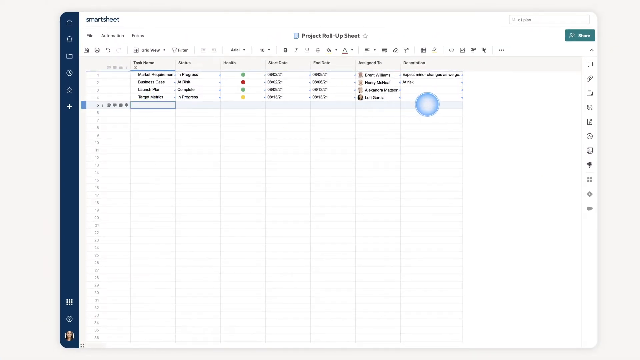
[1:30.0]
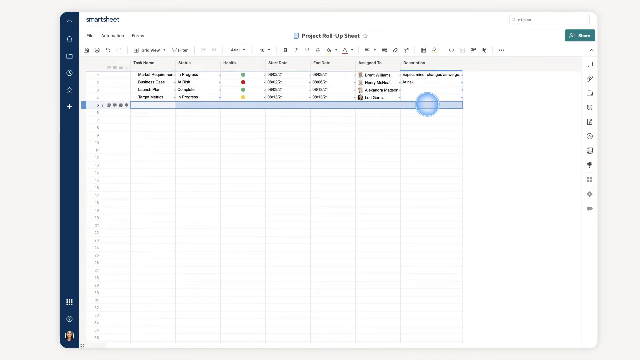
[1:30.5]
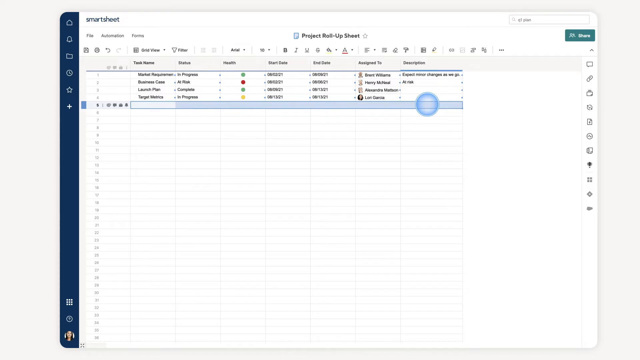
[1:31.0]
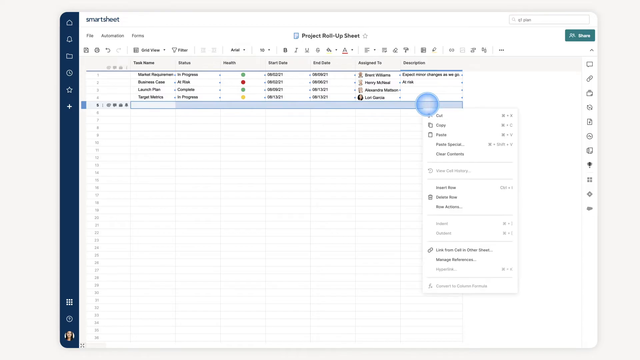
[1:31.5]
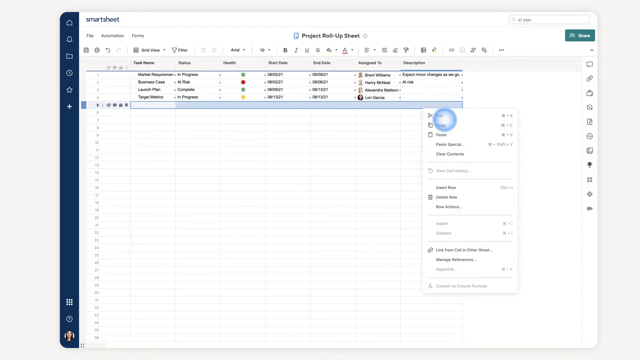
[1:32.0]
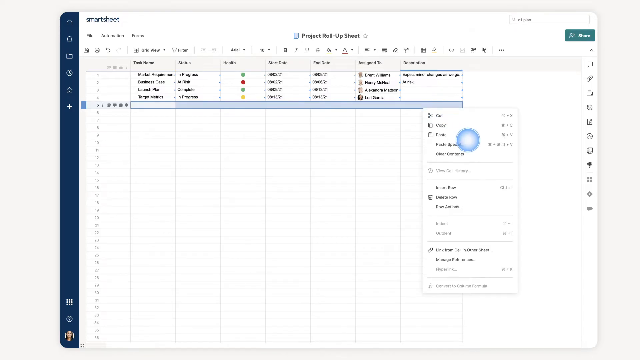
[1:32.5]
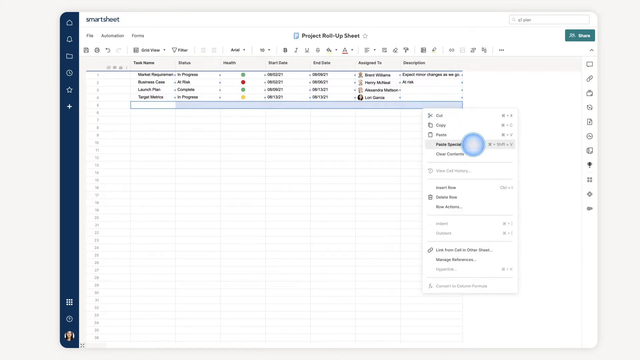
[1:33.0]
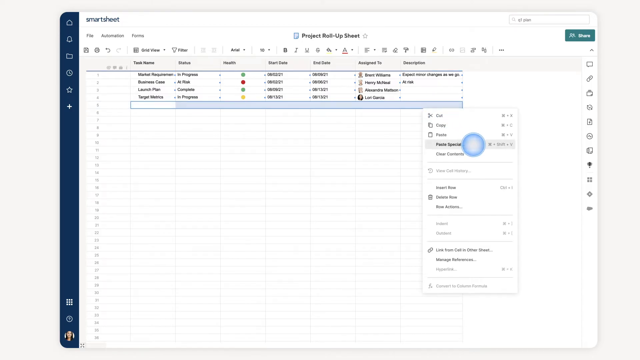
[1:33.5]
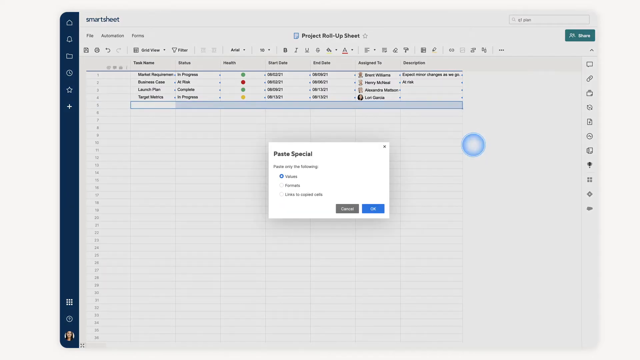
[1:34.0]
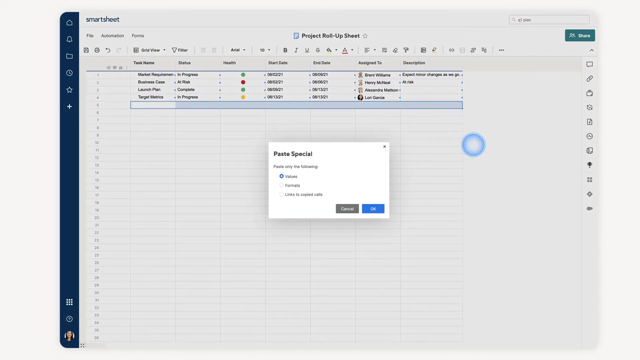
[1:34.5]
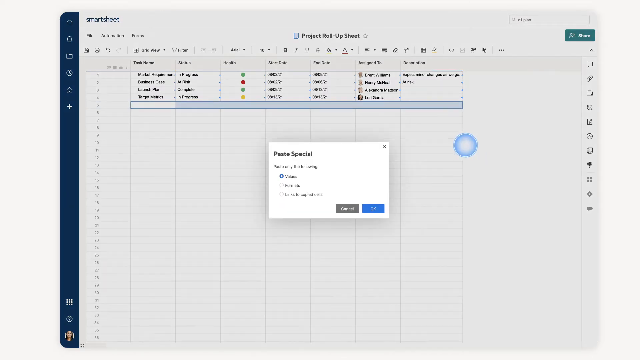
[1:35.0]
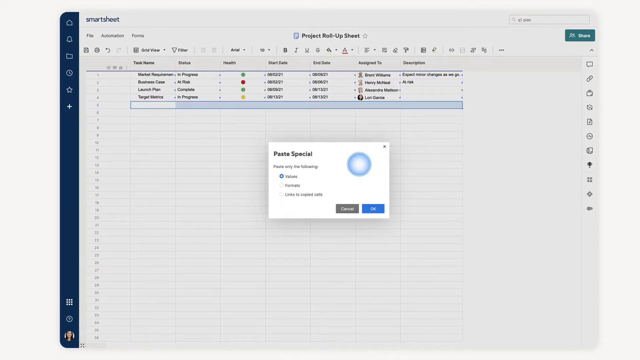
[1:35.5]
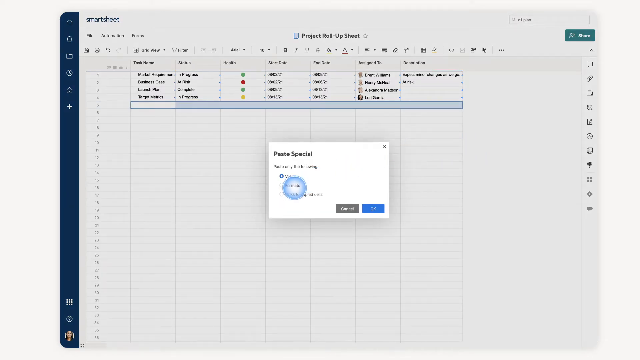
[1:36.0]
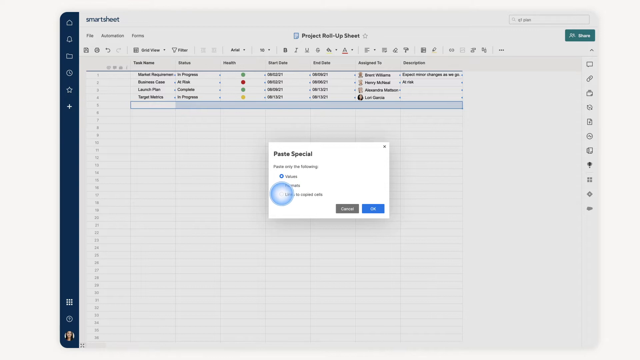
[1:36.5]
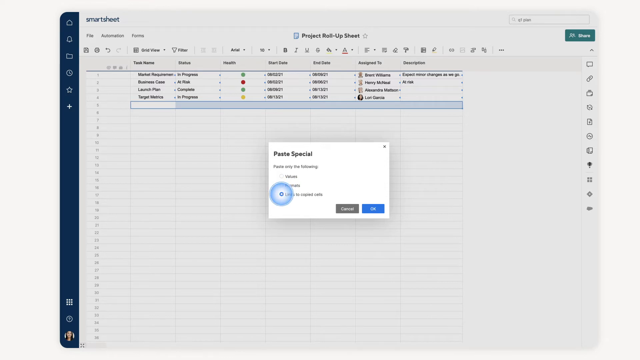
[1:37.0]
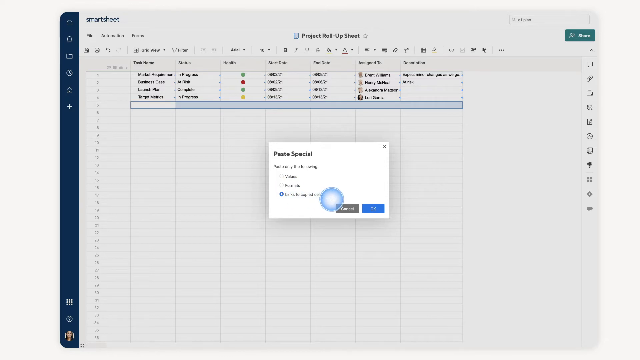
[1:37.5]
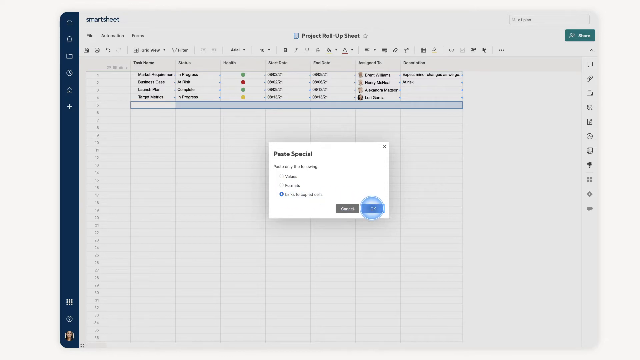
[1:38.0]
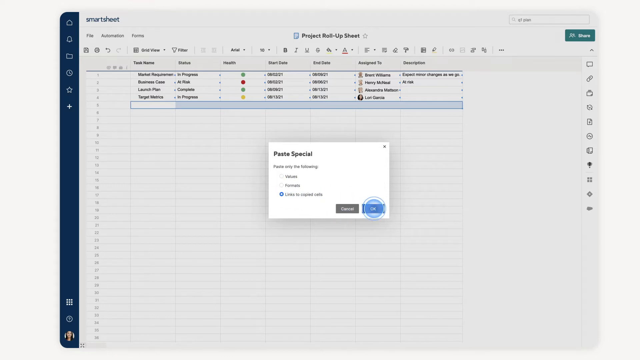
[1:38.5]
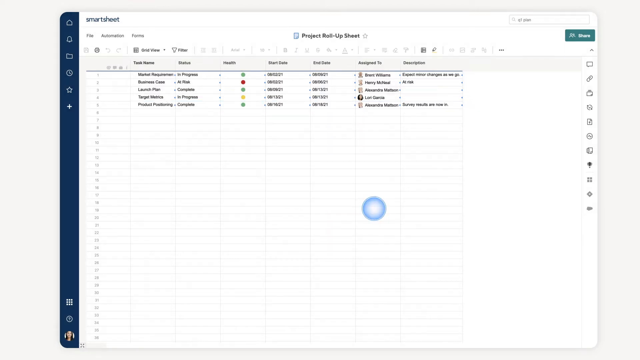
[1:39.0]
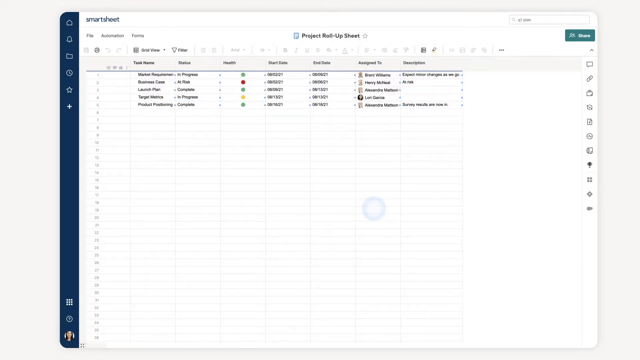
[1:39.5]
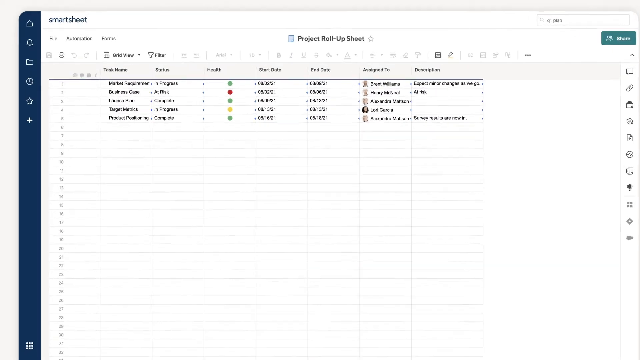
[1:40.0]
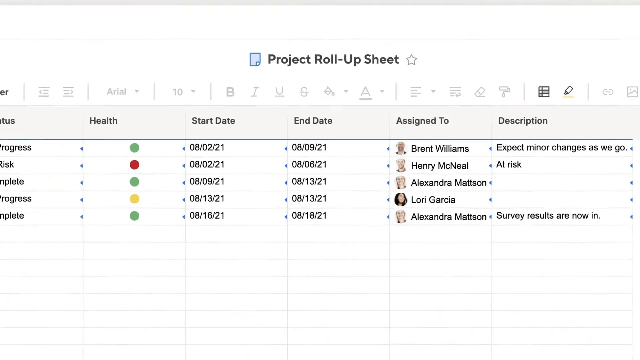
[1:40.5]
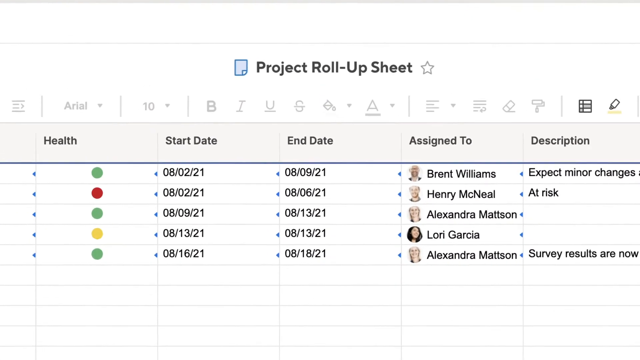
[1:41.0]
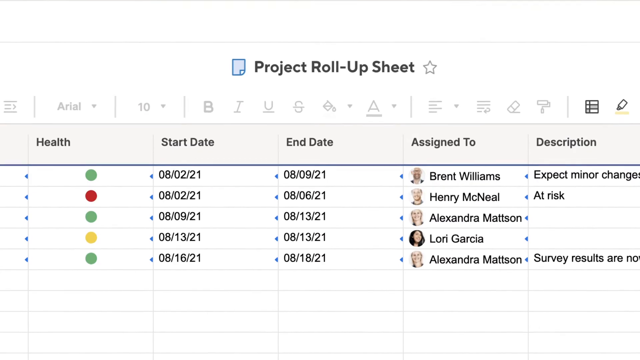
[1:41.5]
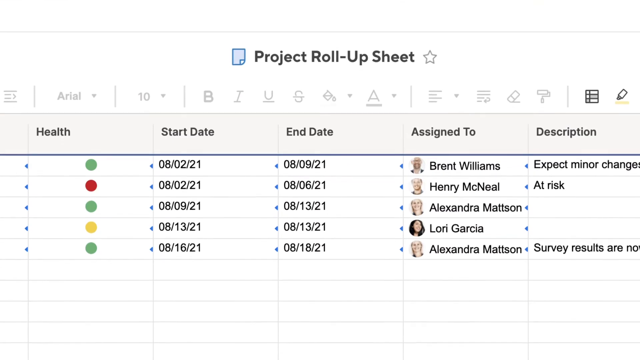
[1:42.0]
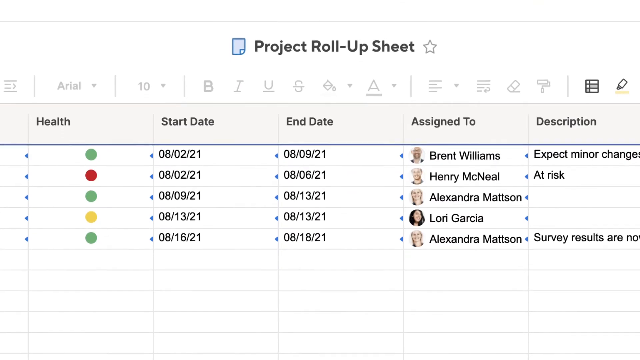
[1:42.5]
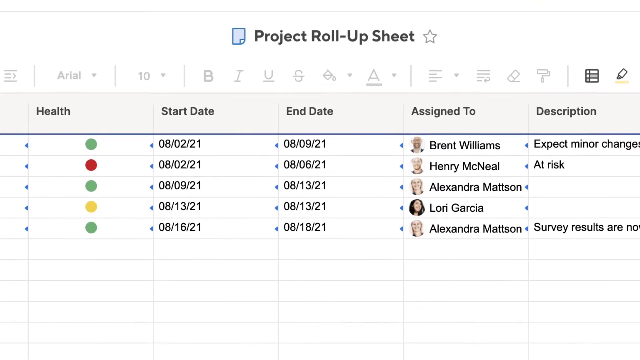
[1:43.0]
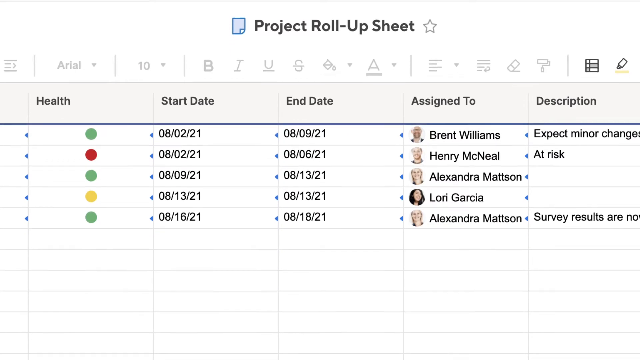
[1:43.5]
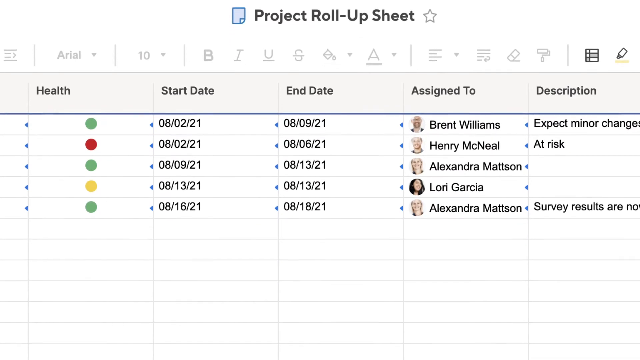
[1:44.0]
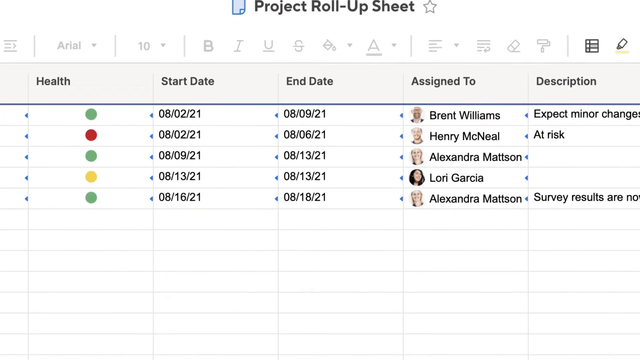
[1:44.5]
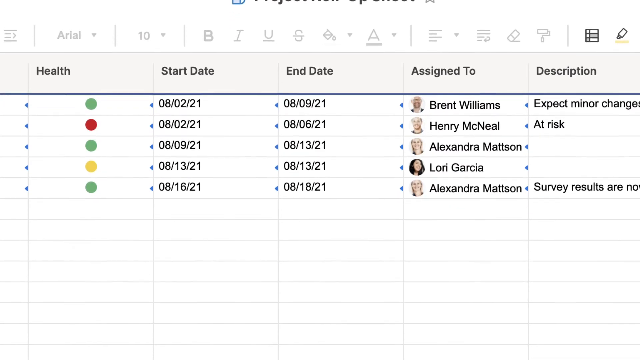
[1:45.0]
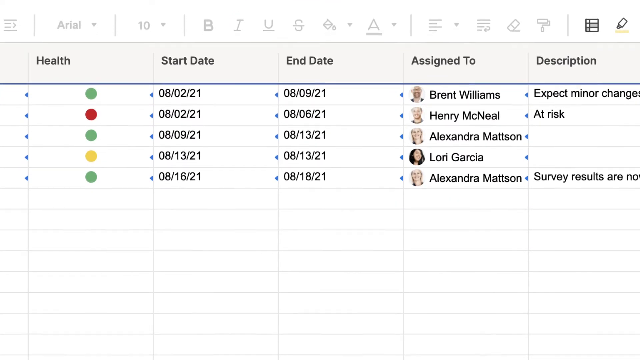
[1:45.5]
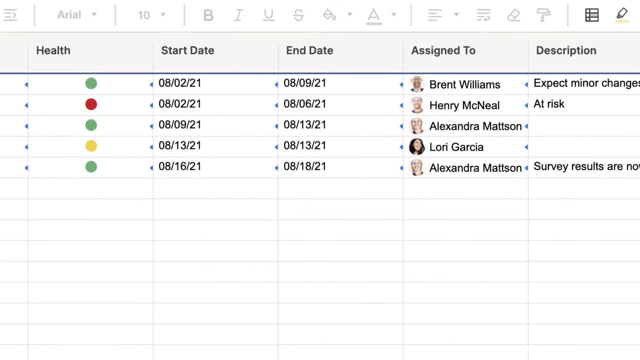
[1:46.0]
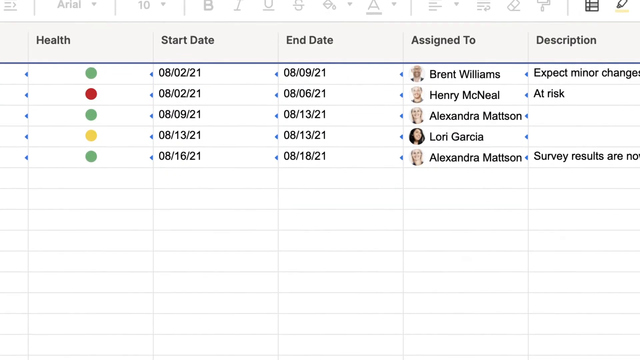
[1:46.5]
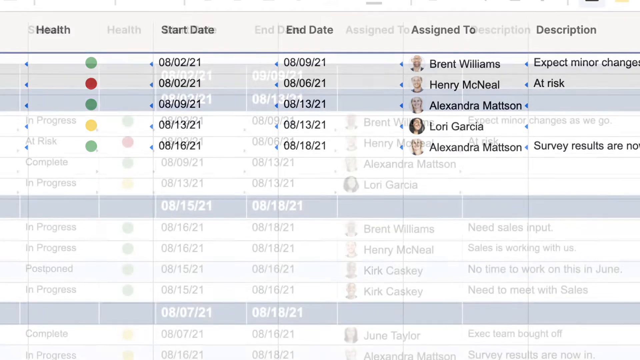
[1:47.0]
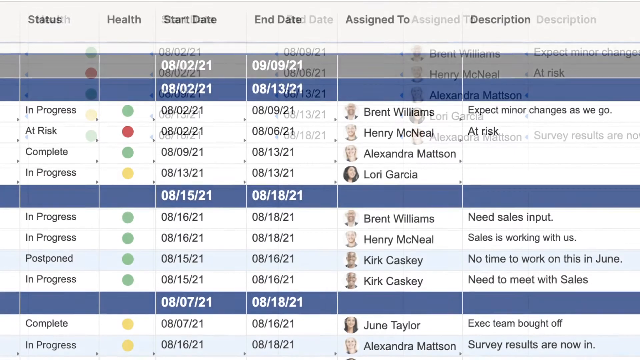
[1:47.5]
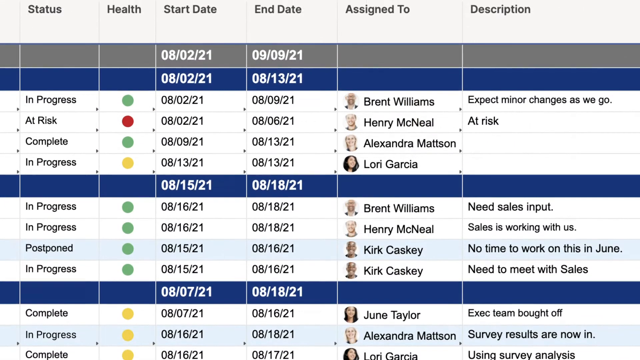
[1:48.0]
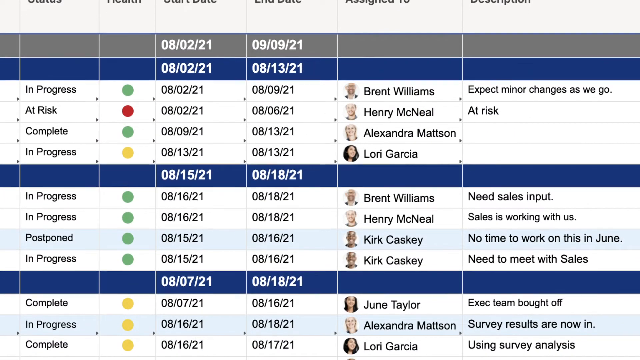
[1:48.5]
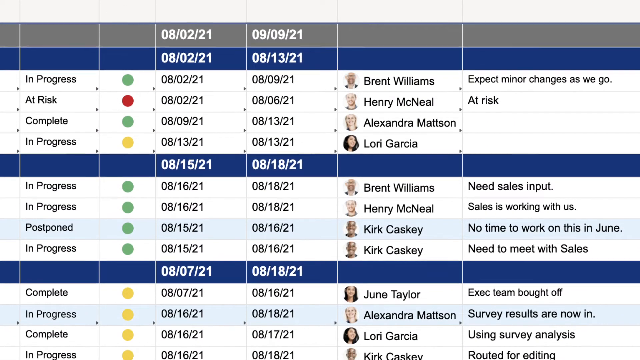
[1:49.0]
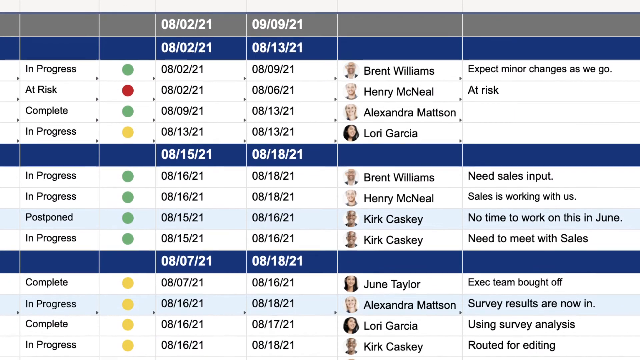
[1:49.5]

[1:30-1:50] The Smartsheet video shows what looks like editing, with something being pasted. The project rollup sheet is shown with people's names: Brent Williams, Harriet McNeil, Alexandra Madison, Lori Garcia, and Alexandra Madsen for another task. The description for Brent Williams mentions minor changes, Henry McNeil's says at risk, and at the bottom Alexandra Madsen's begins "survey results are" before being cut off. Then Brent Williams, Henry McNeil and Kurt Kasky twice appear with comments such as "needs sales input," "sales is working with us," "no time to work on this in June" and "need to meet with sales," apparently comments placed at the side of the bar. June Taylor's comment is "the ZEK team bought off," Alexandra Mattson's is "survey results are now in," Gloria Garcia's is "using survey analysis," Kurt Kasky's is "routed for editing" and Brent Williams's is "CMO out of town."